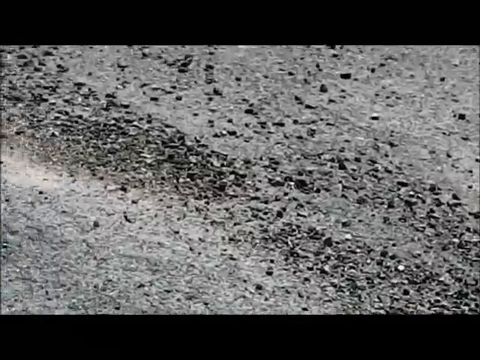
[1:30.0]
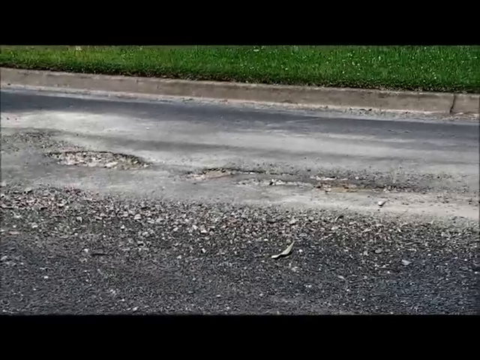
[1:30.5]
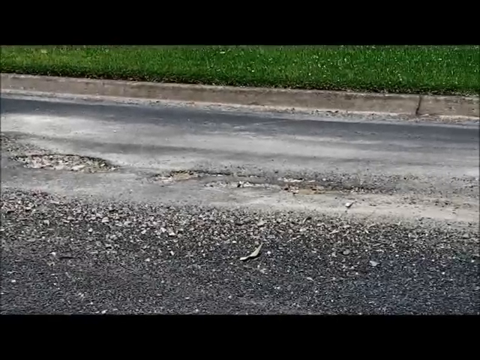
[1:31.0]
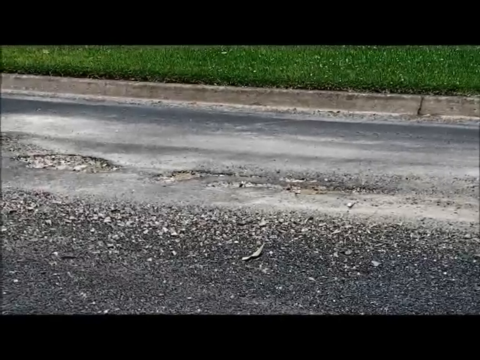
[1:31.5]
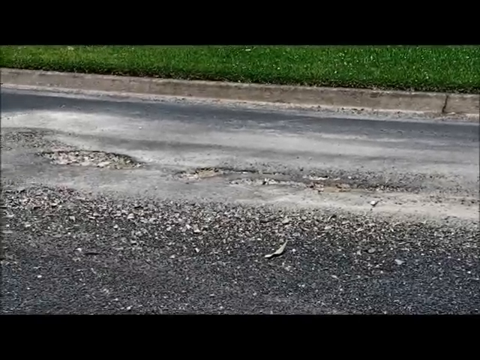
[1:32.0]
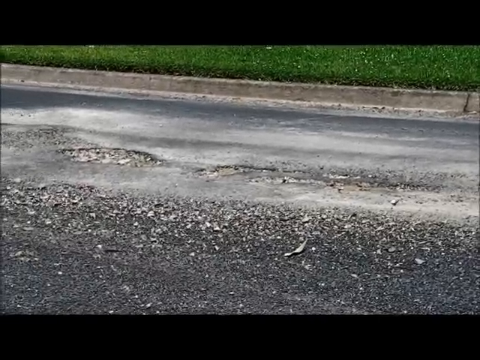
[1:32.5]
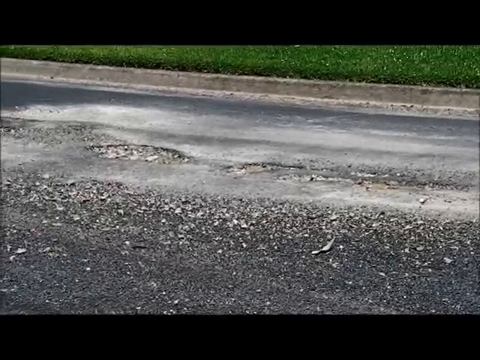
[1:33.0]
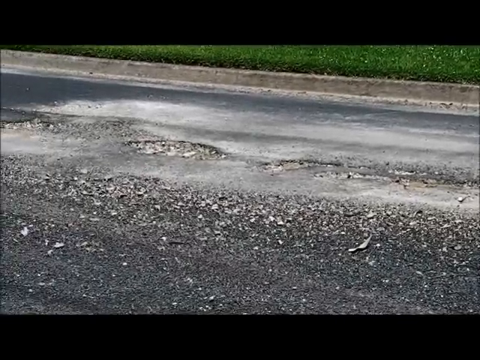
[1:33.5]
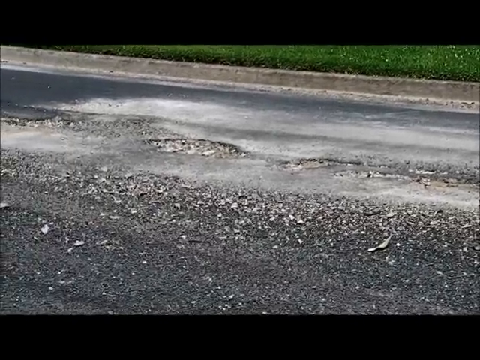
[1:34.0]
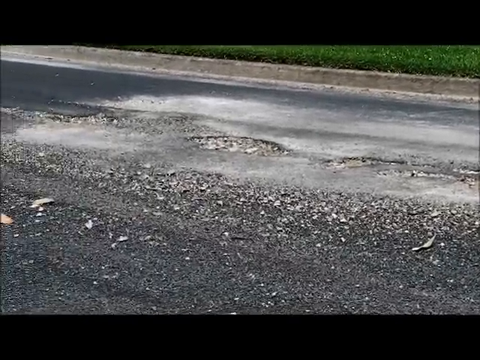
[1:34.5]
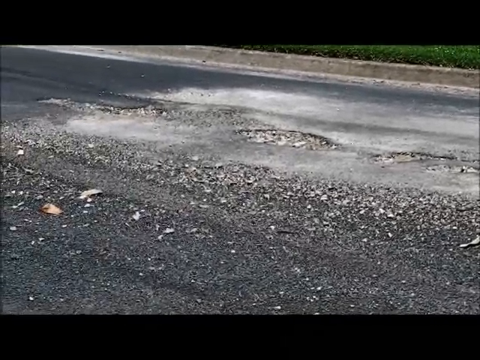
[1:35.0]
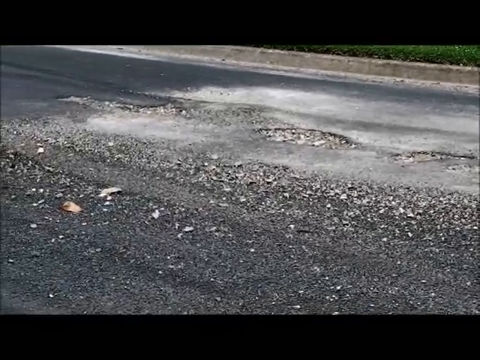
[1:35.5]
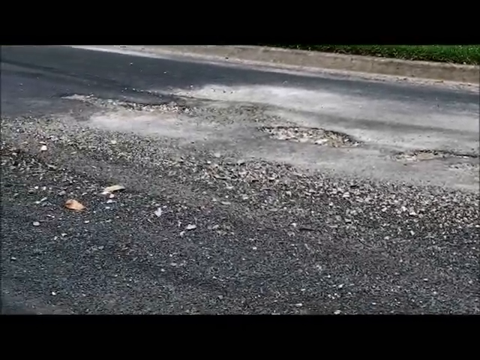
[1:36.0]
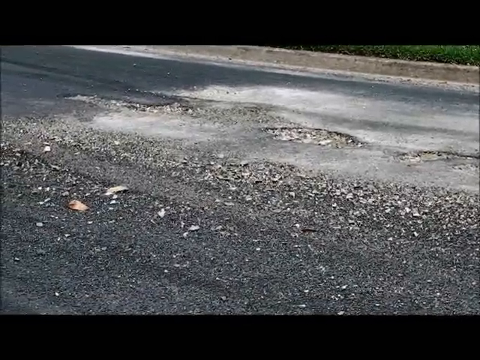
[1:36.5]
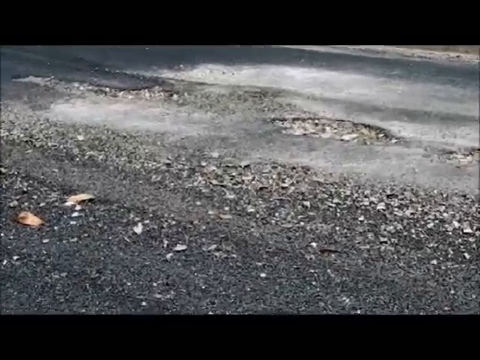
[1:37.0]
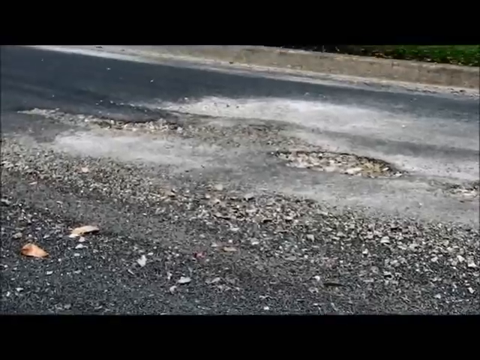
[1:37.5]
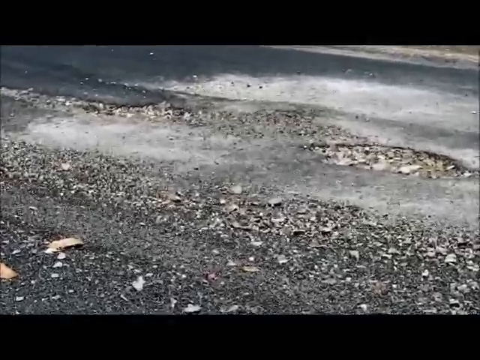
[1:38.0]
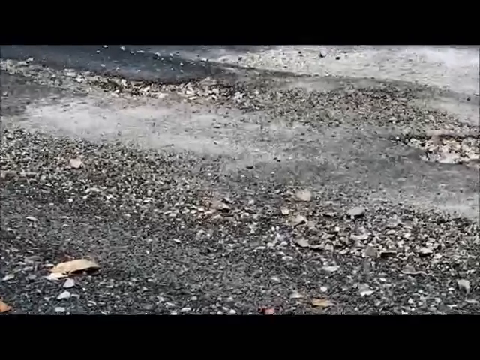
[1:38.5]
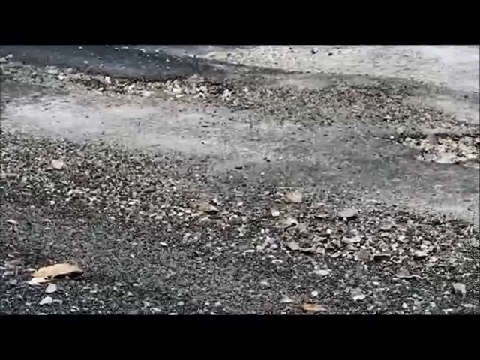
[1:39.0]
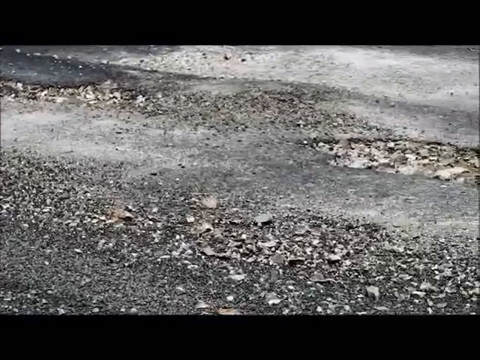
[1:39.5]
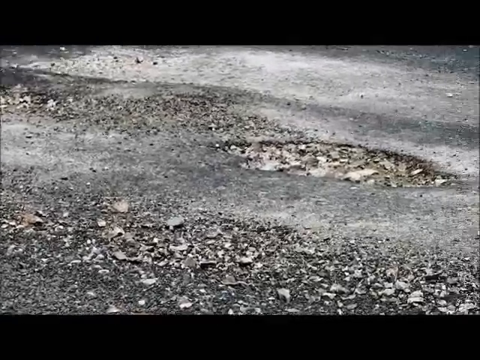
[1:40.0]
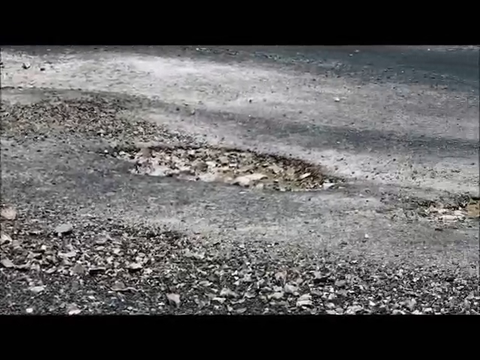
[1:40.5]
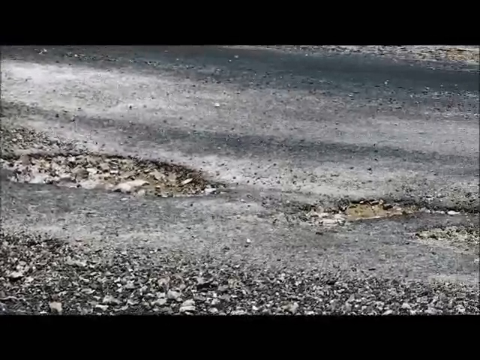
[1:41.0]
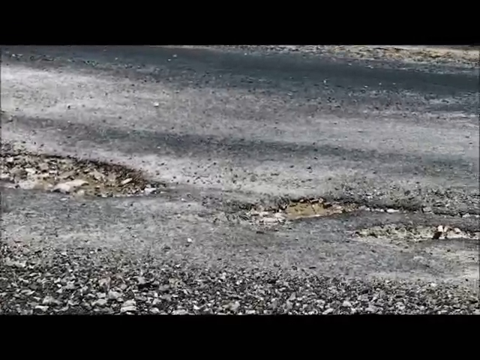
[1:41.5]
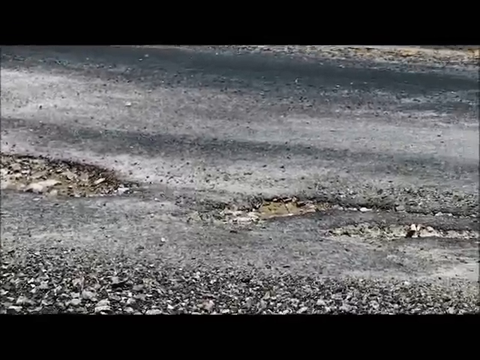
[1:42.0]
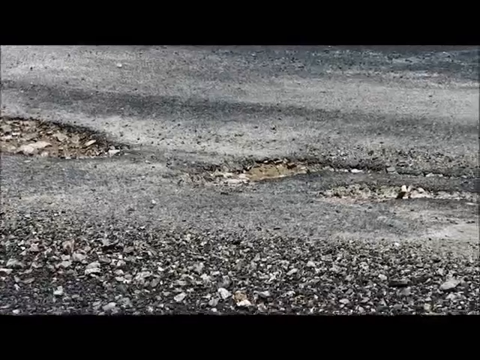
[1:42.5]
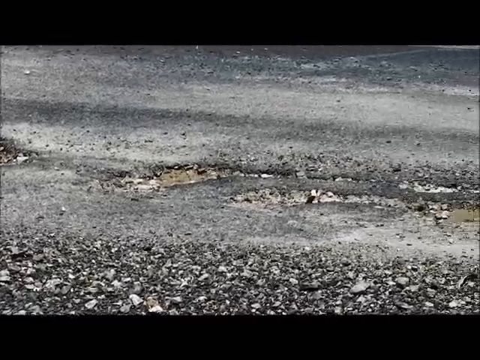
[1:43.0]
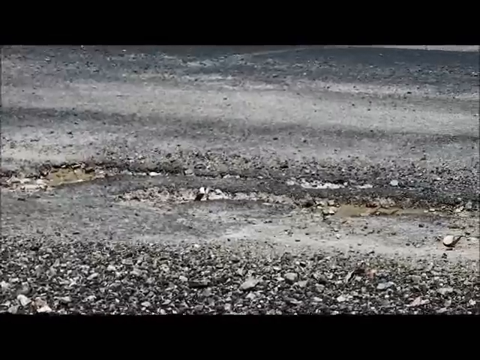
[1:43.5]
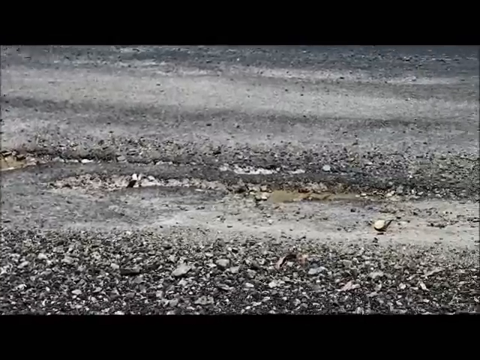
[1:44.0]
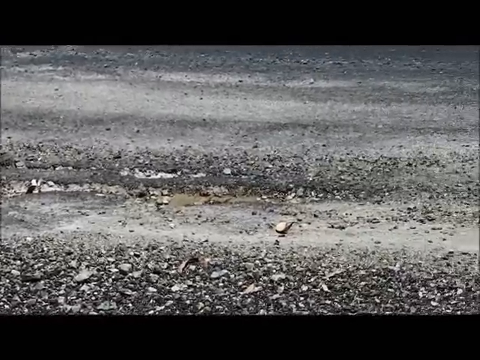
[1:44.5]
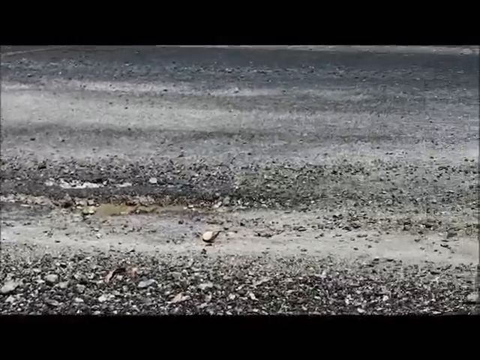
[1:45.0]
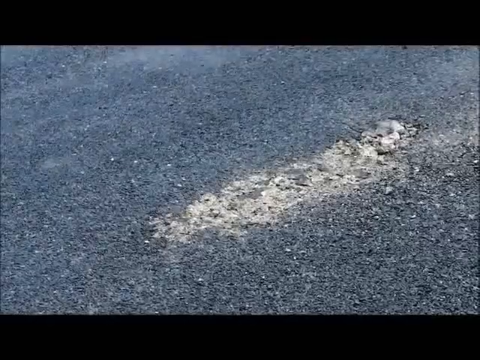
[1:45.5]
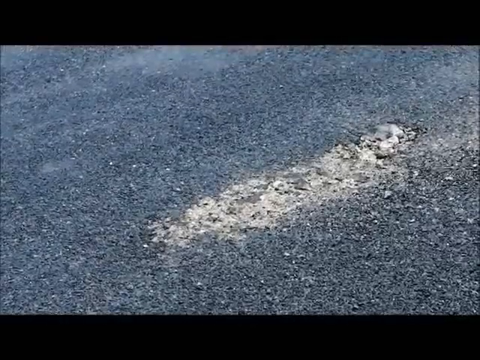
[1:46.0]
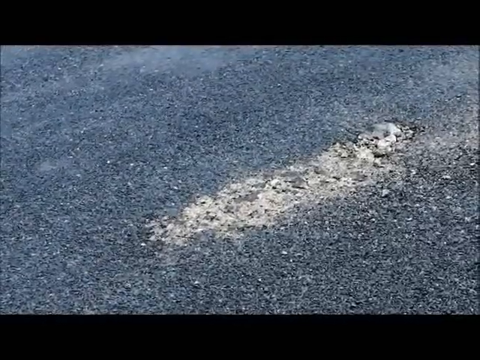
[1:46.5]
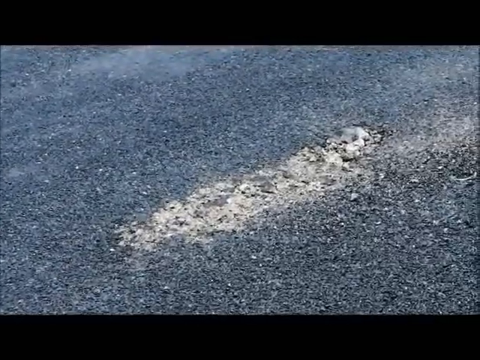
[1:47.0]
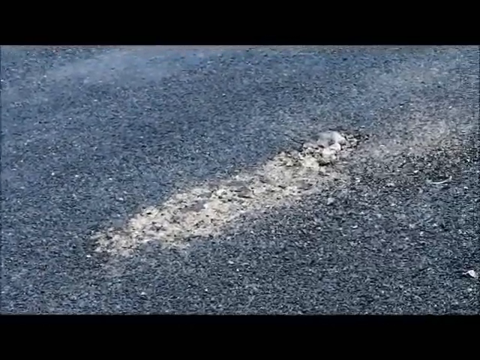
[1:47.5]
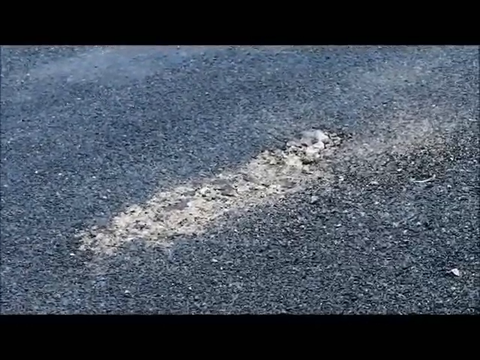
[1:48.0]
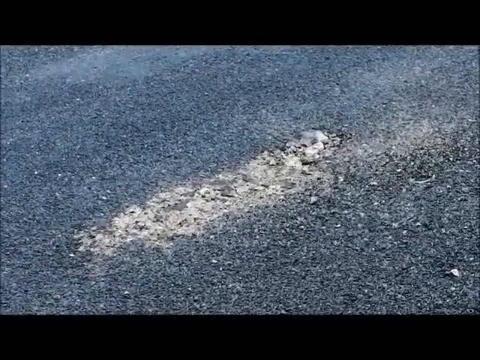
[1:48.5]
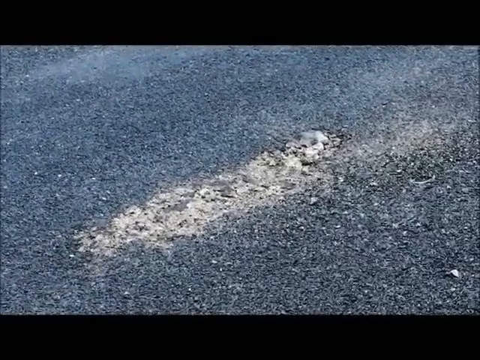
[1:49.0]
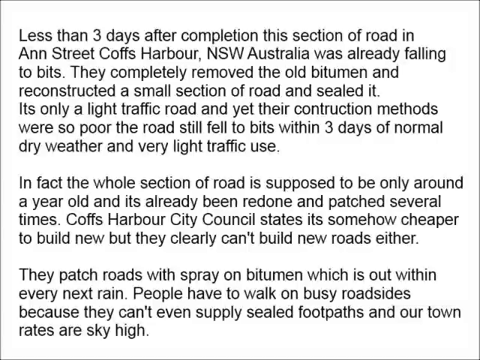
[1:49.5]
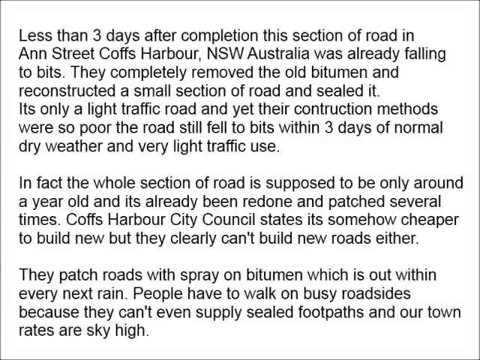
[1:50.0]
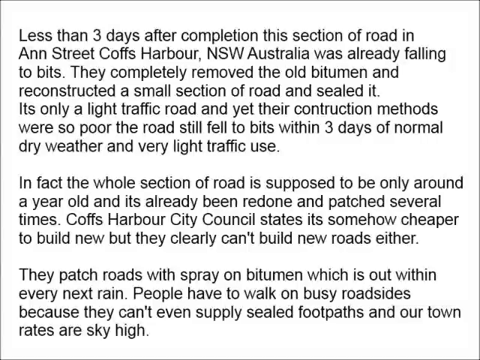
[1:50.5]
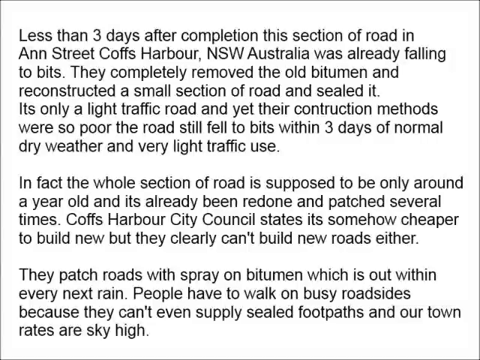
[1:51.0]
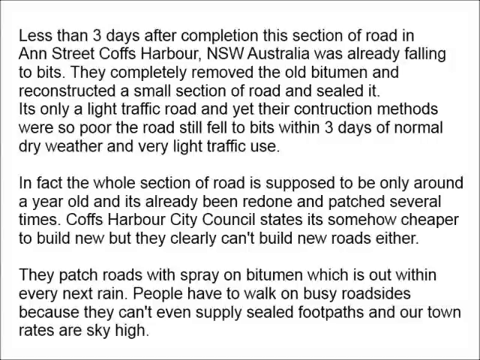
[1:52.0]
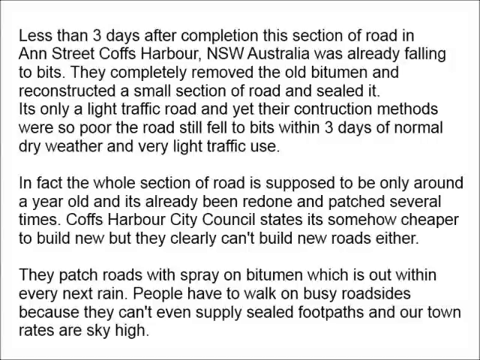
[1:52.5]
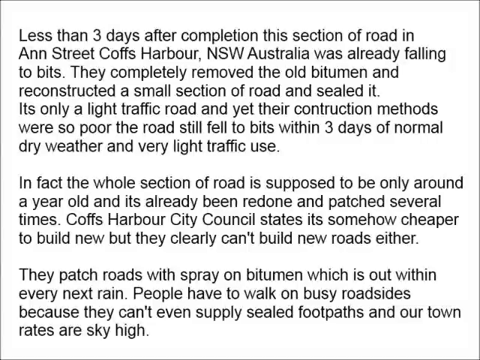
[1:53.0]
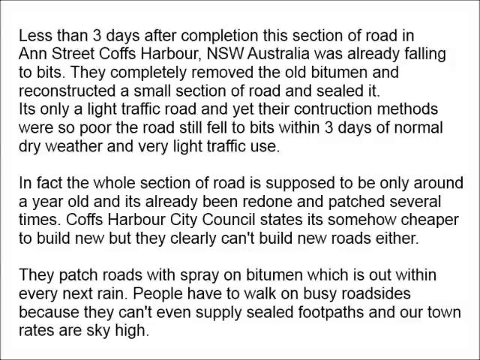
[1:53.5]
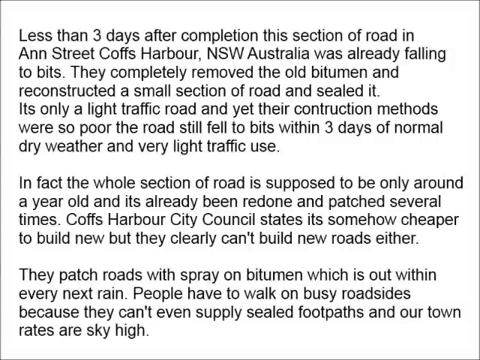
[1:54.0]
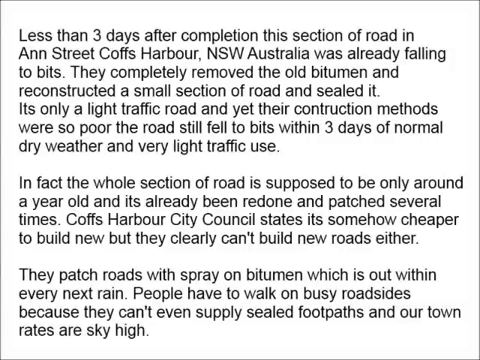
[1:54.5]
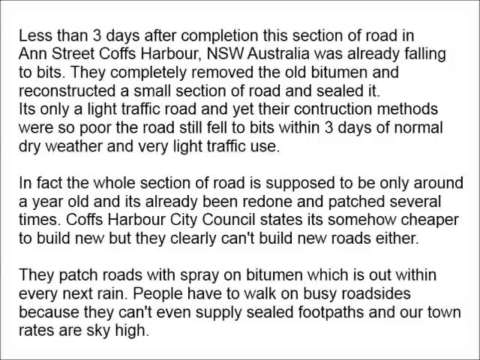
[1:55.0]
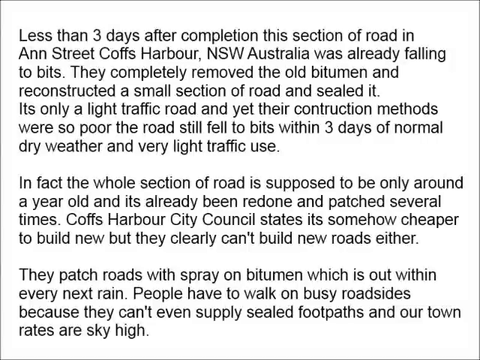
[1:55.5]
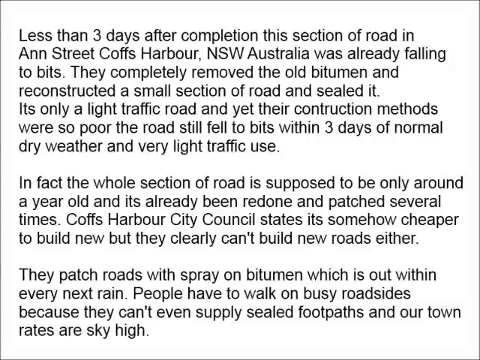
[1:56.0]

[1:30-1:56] Another view of the road appears, more of a side view. The road is at the bottom, with a lot of debris on the bottom side; in the upper area is the curve of the road, and at the top there is green grass beyond the curve. A cluster of rocks is very near the viewer, showing the damaged road. The view zooms in on damaged areas of the road, showing a couple of potholes. In some areas the surface looks like very thick gravel with a lot of clustered rocks, and the road is mis-colored, with some areas dark gray and others very white and chalky. Then very large black text on a white background appears, explaining the patches on the roads and what is being done to seal and fix them.